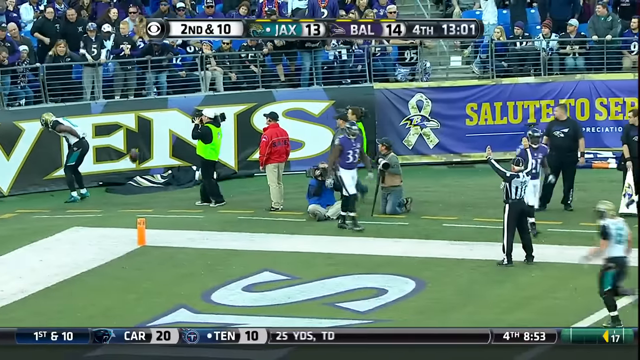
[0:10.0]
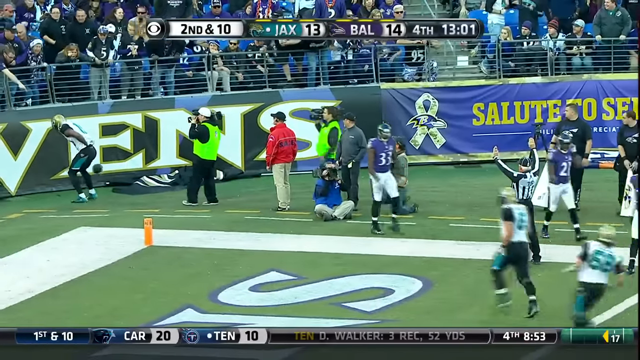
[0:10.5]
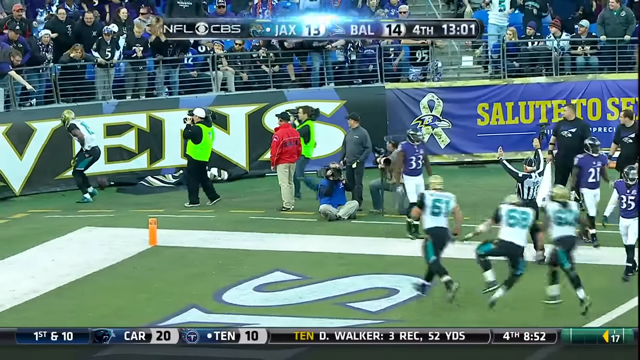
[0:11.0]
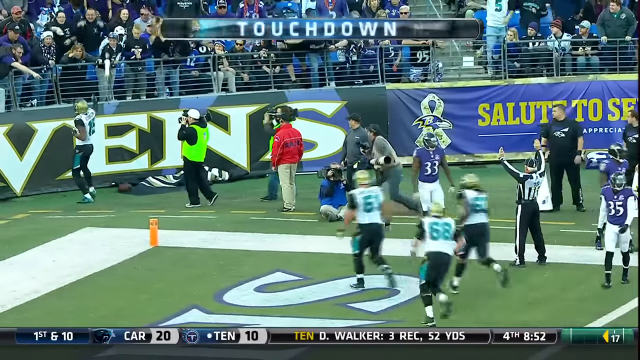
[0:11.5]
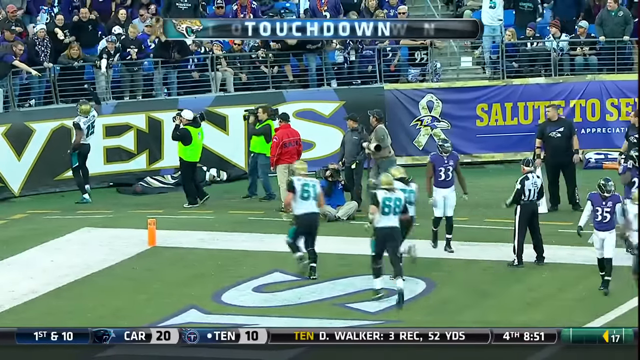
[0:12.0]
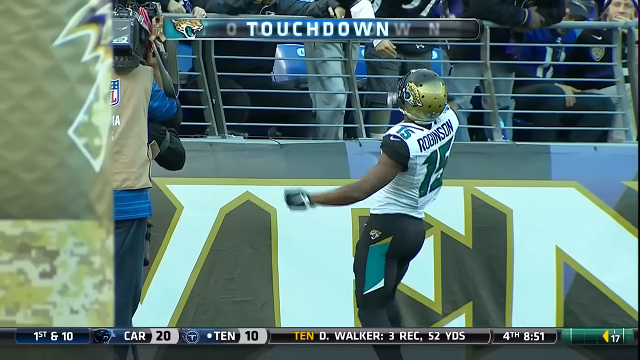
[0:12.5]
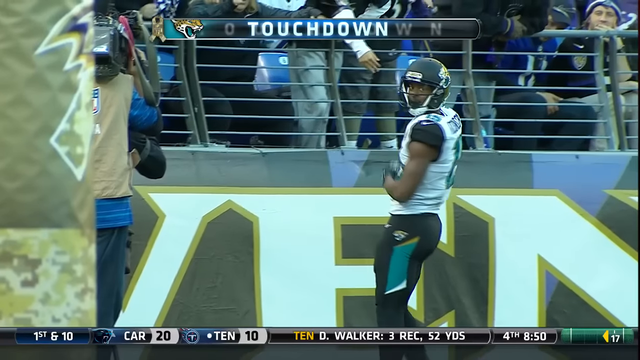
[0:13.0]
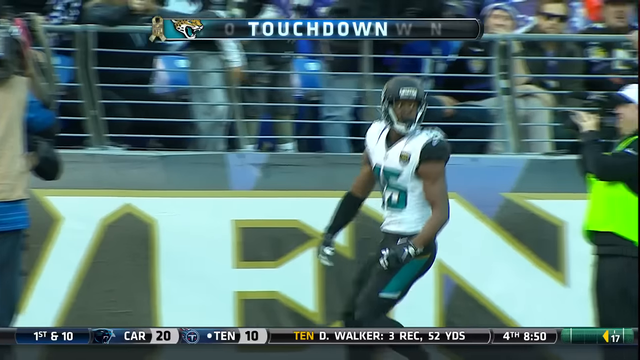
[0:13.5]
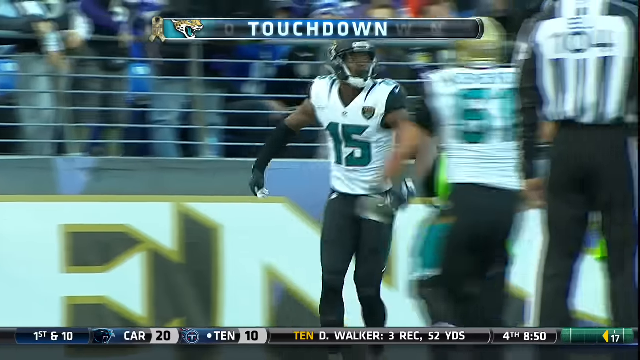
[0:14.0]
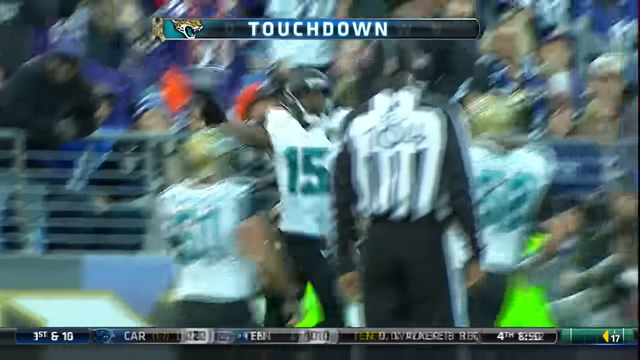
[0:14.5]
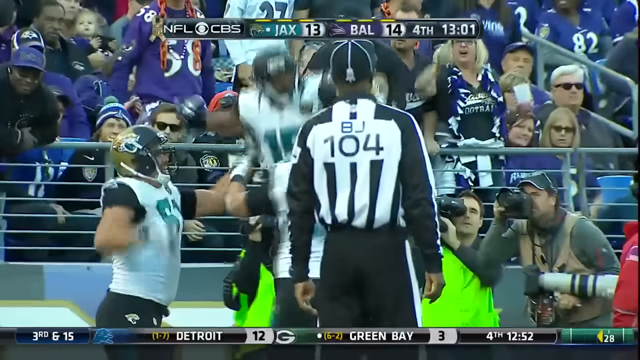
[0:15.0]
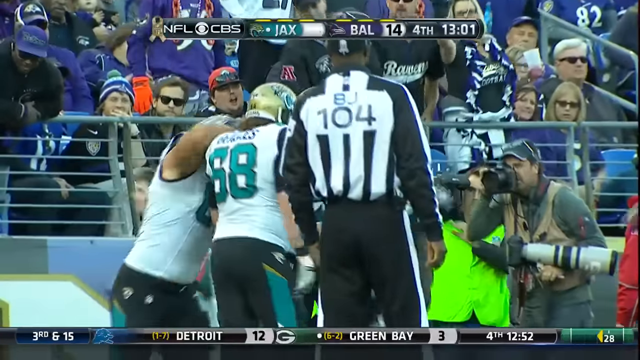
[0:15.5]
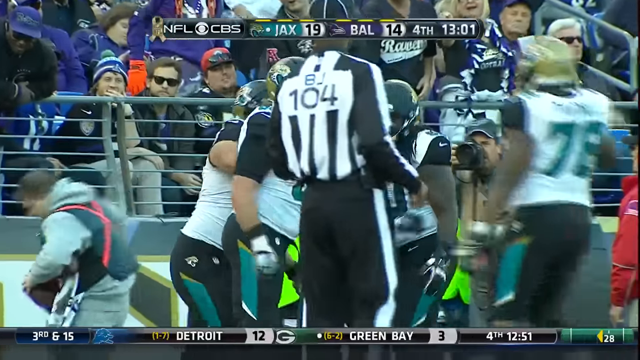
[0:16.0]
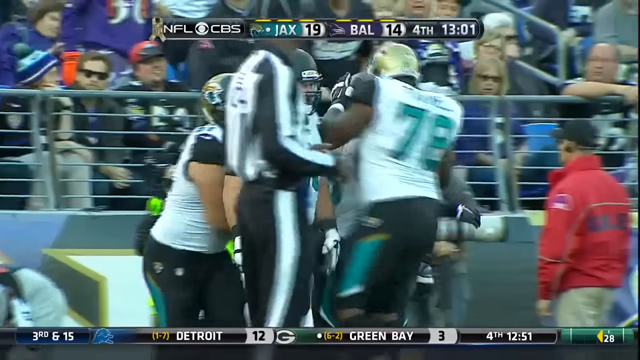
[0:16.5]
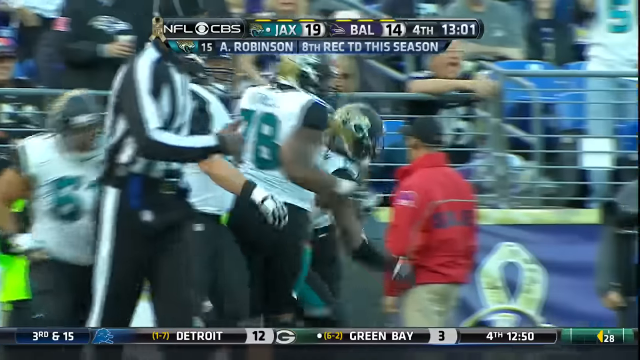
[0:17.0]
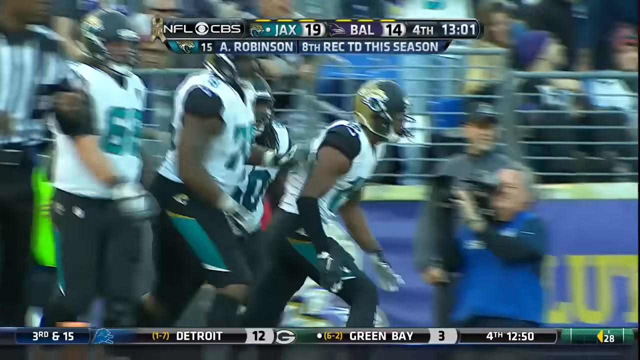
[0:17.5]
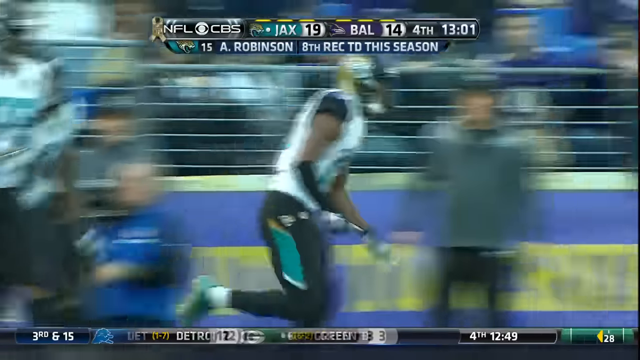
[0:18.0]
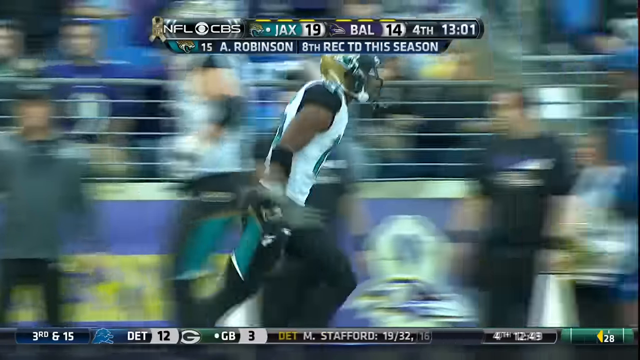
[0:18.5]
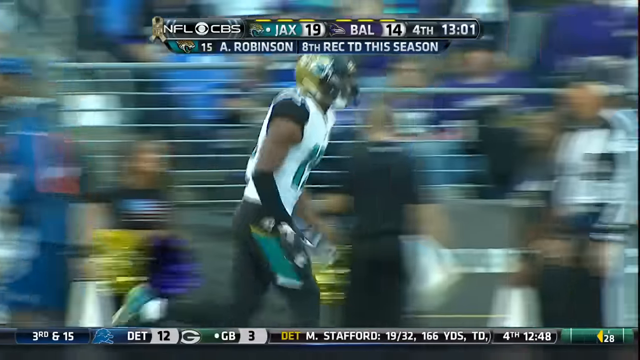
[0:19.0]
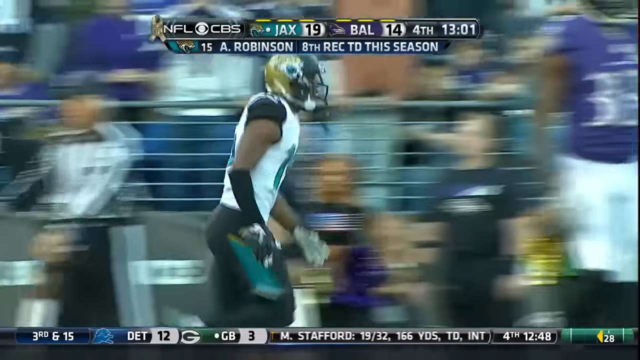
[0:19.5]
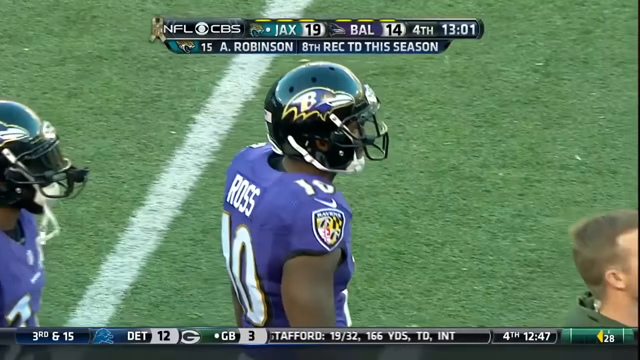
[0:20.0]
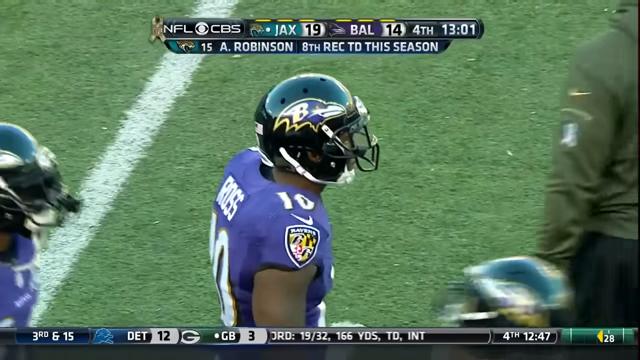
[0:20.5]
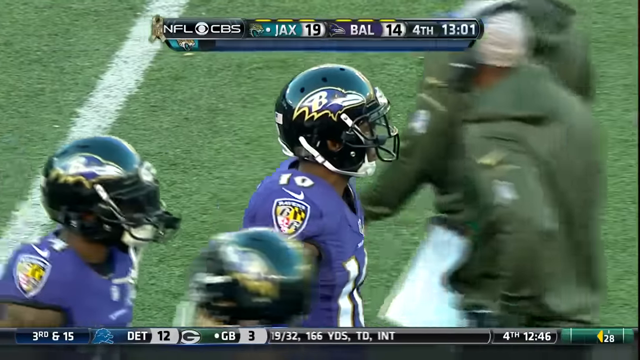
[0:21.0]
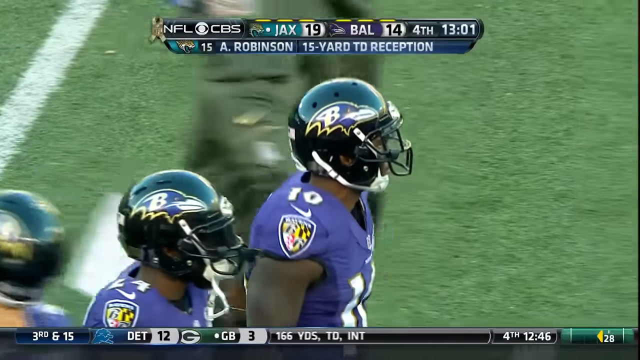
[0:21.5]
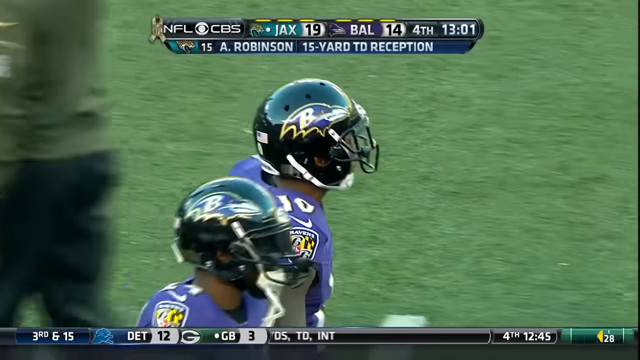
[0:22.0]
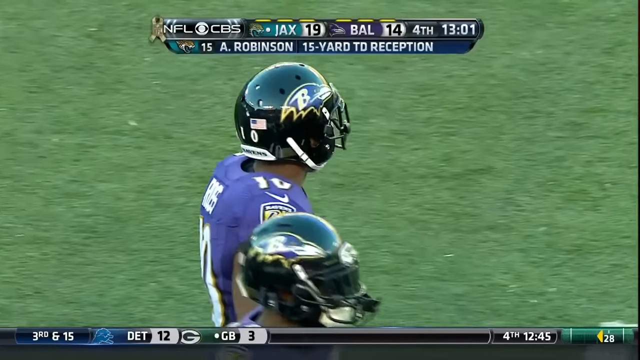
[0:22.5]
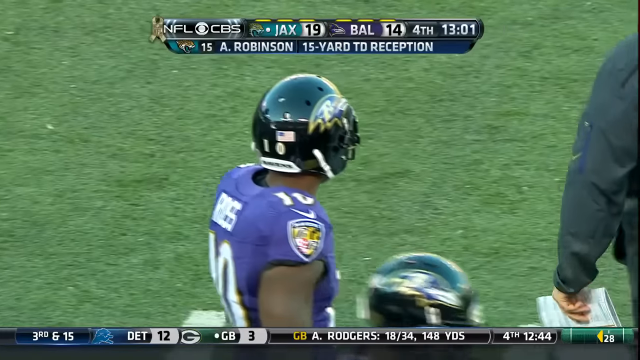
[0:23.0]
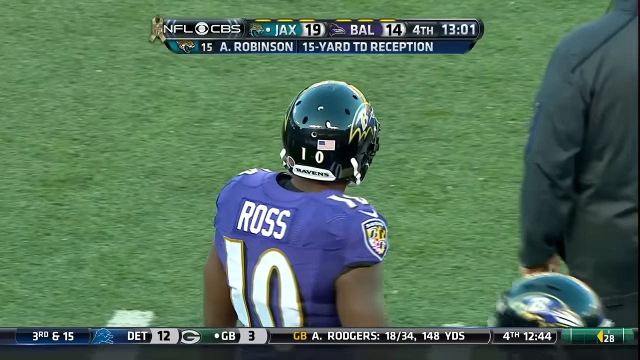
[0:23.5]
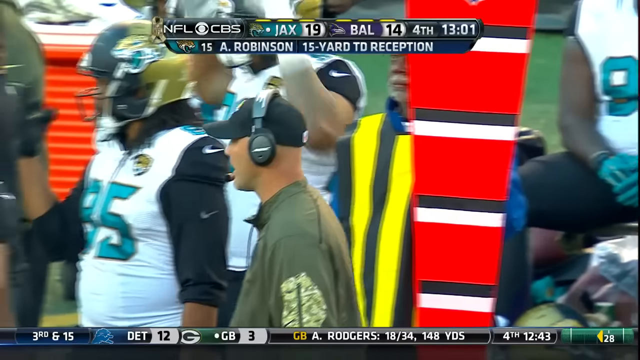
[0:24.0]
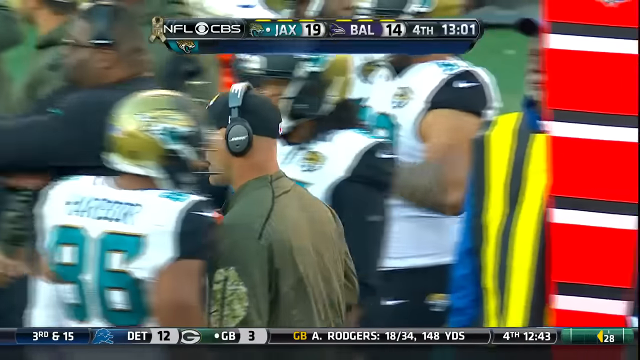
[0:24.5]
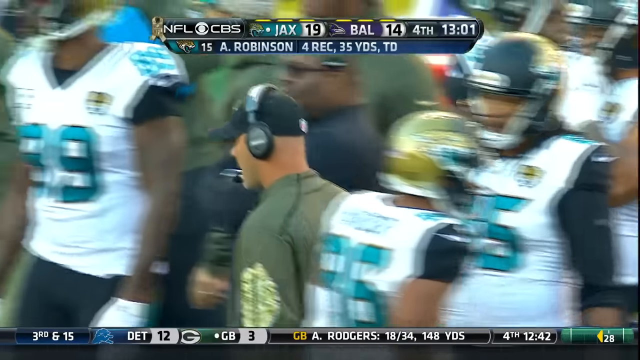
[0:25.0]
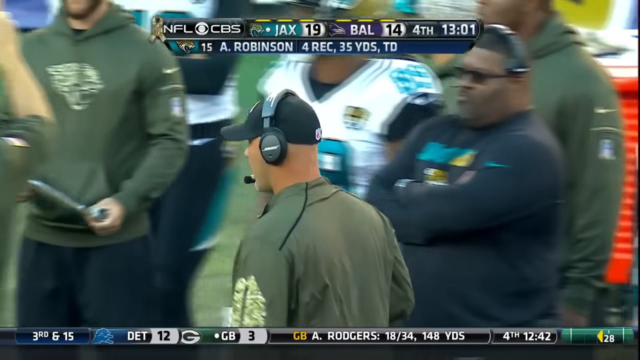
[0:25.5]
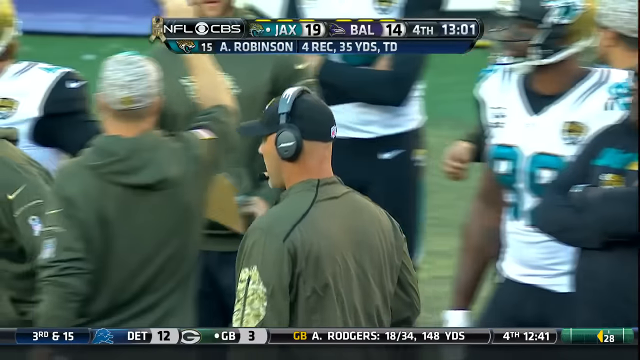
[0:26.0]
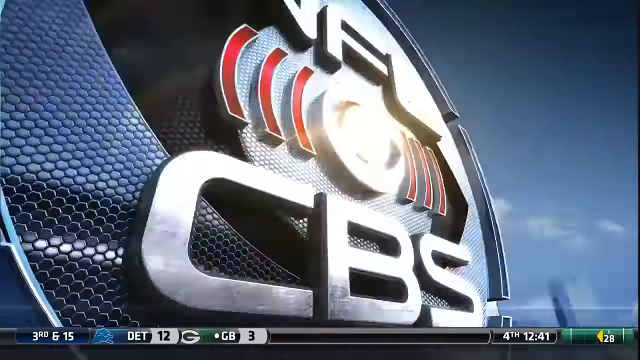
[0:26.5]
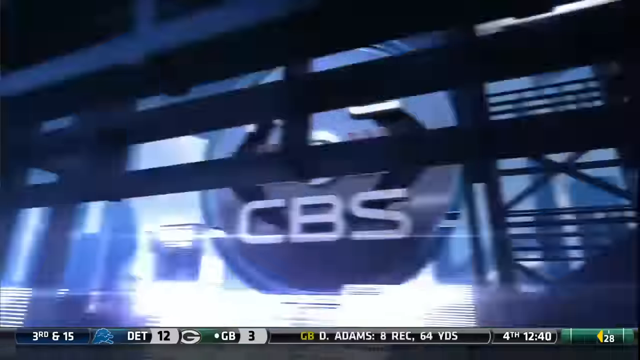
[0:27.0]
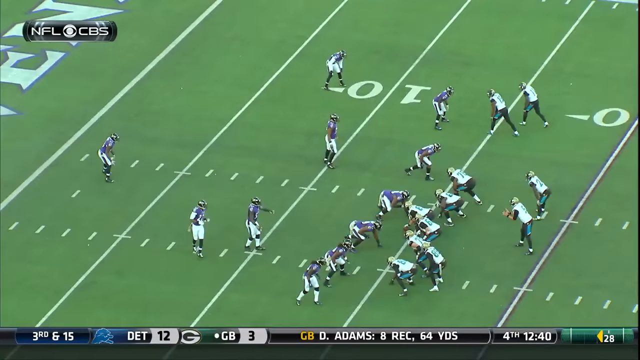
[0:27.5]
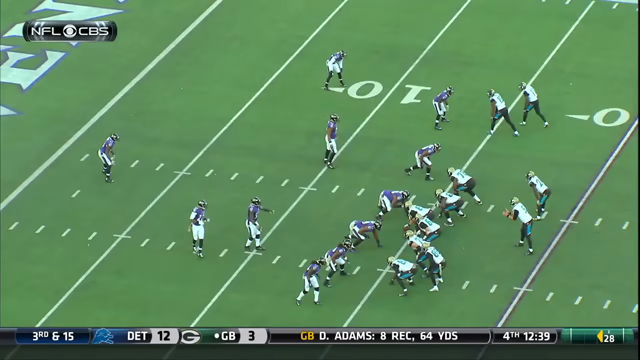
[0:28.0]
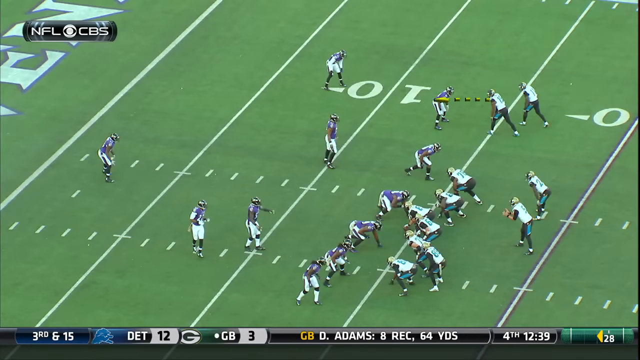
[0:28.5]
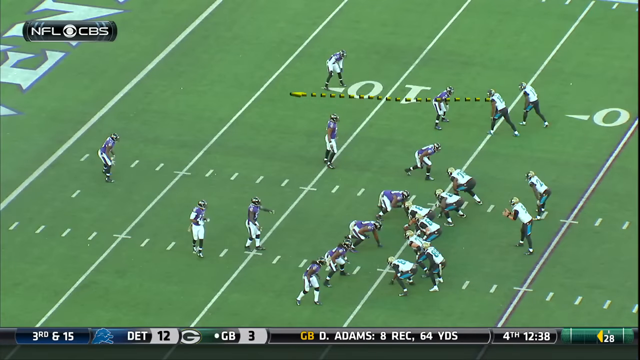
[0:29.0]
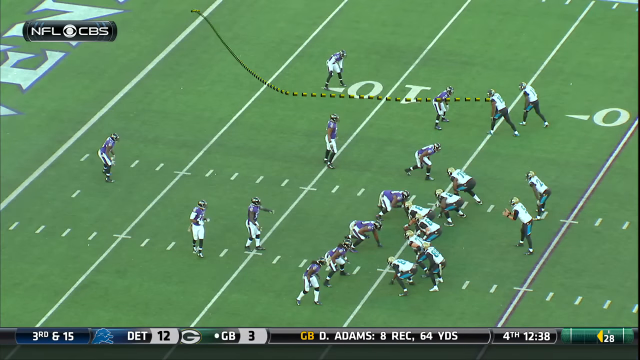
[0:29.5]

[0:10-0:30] Football players are on the field, along with three cameramen taking videos and pictures of the players and the game. A producer wearing headsets and a microphone walks around the field. The players are divided into two teams: one team wears black shorts as well as green, with white tops written in green, the numbers and the names at the top of the back in green. The other team wears white shorts with blue trimmings on the side and blue shirts written in white, with the surnames visible above the numbers. The players wear protective gear. NFL and CBS logos are visible, along with other text such as "Ravens" and "Raw". A referee in black long pants and a black and white top oversees the game.